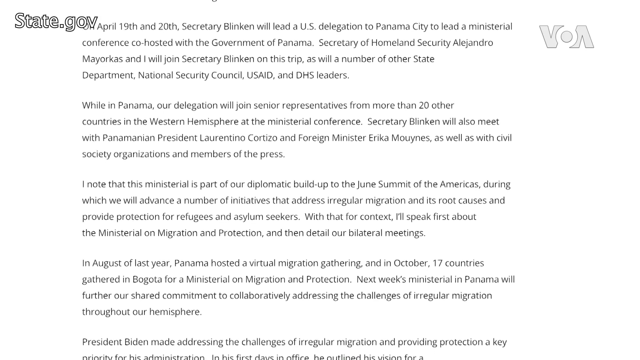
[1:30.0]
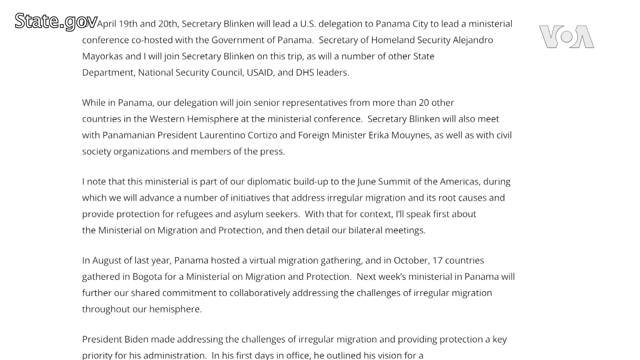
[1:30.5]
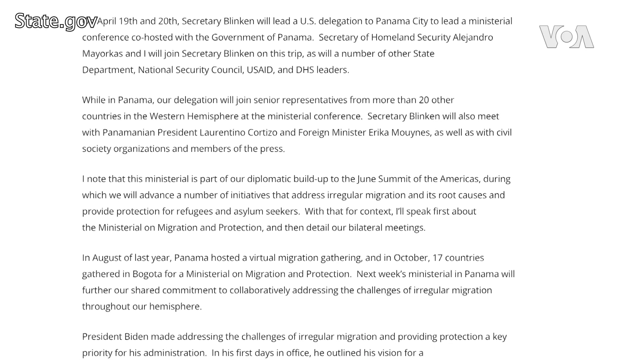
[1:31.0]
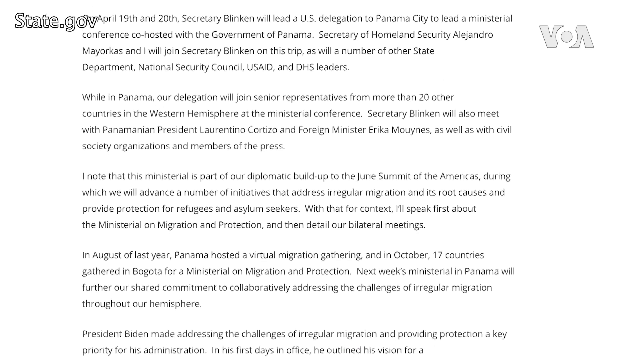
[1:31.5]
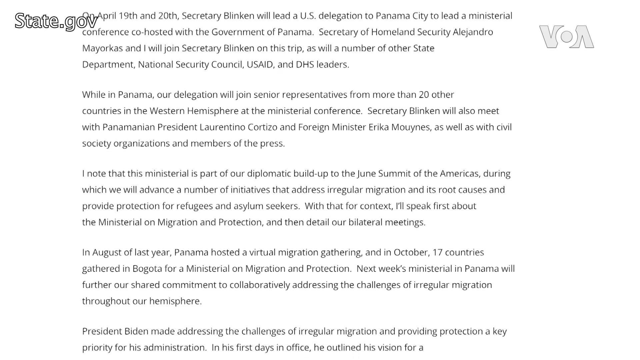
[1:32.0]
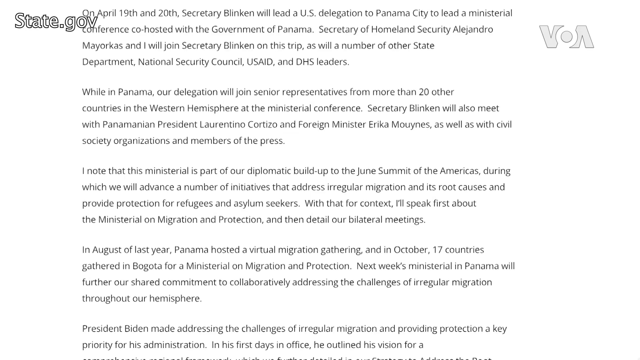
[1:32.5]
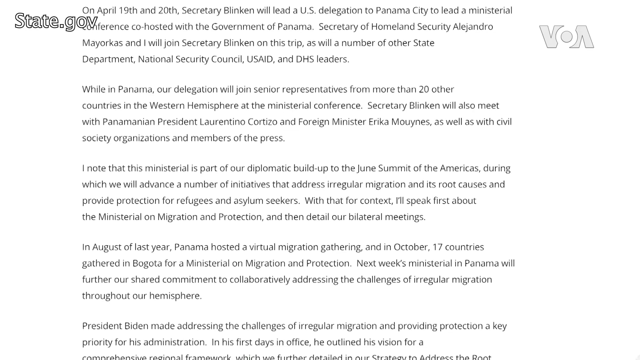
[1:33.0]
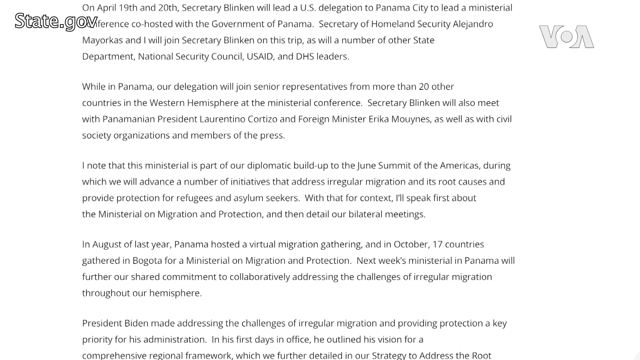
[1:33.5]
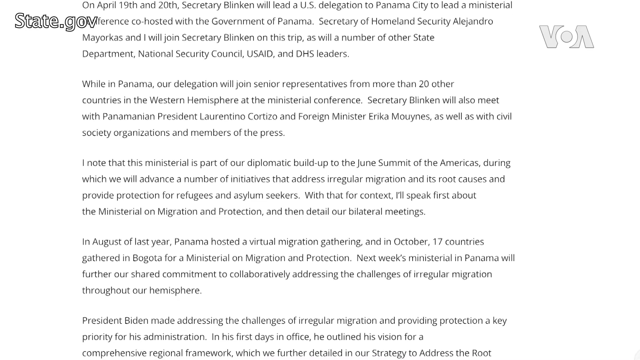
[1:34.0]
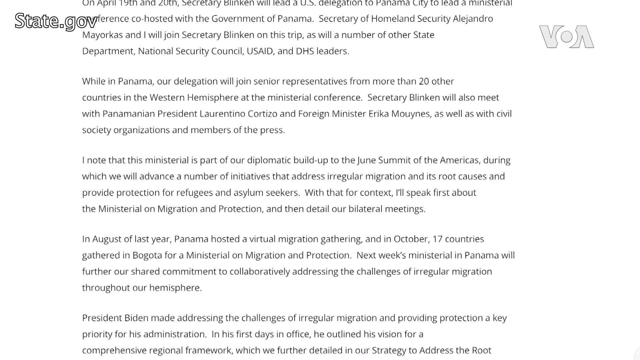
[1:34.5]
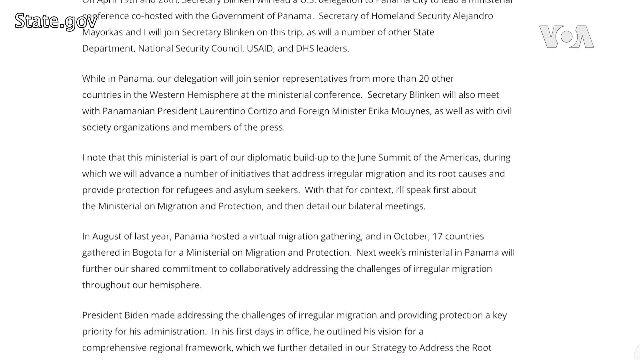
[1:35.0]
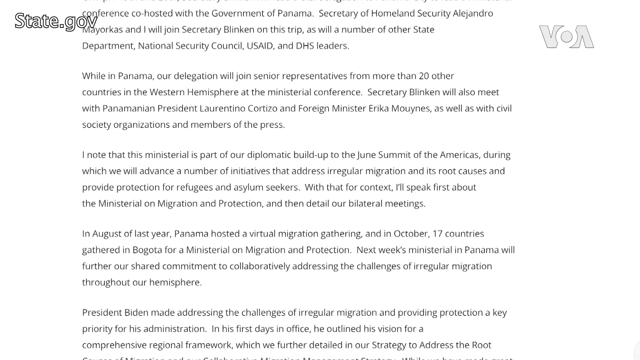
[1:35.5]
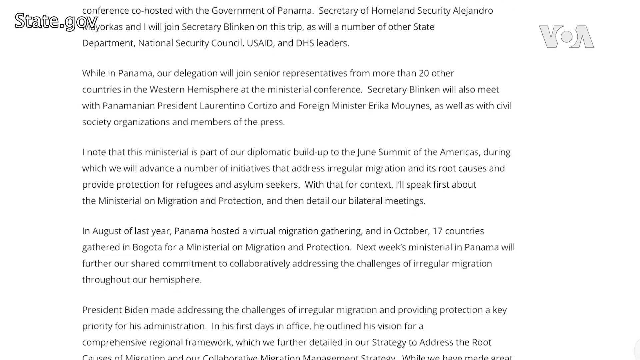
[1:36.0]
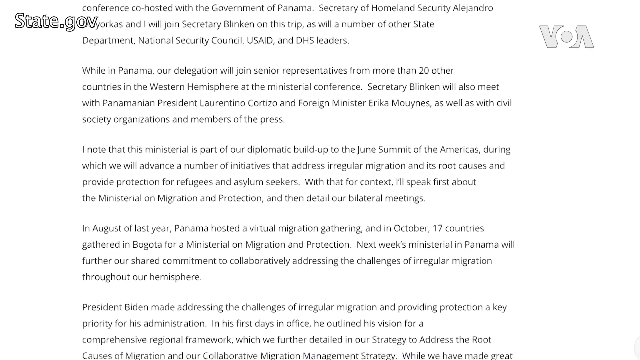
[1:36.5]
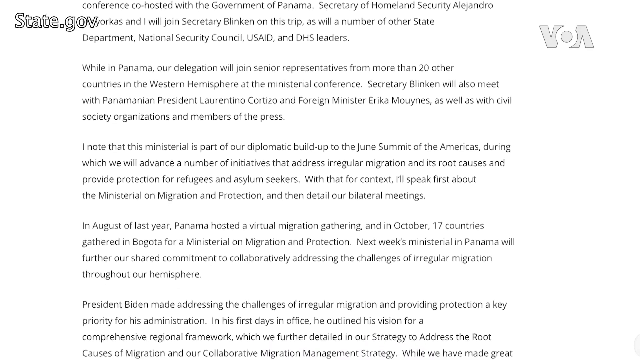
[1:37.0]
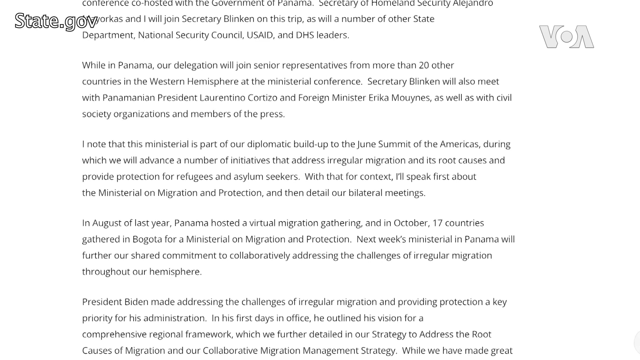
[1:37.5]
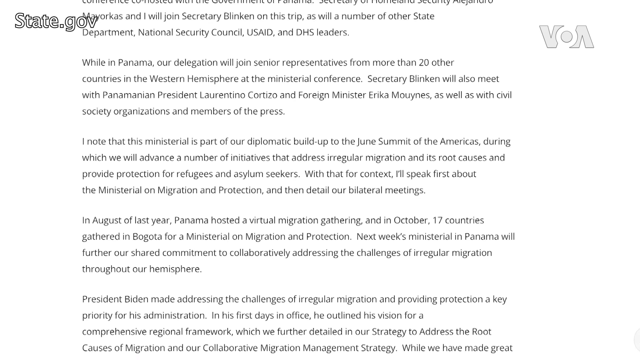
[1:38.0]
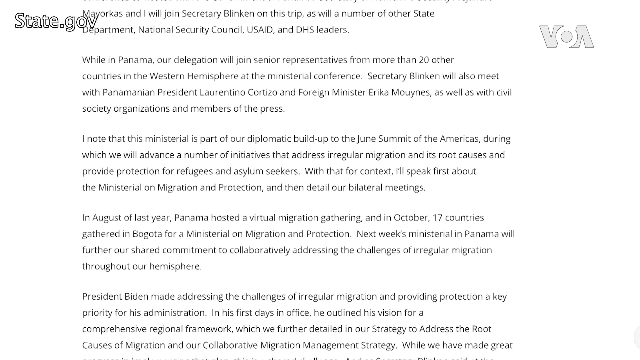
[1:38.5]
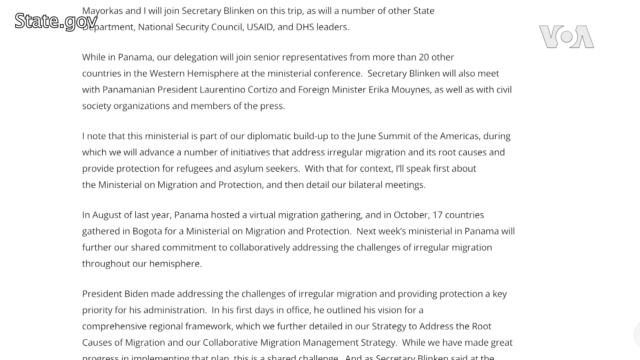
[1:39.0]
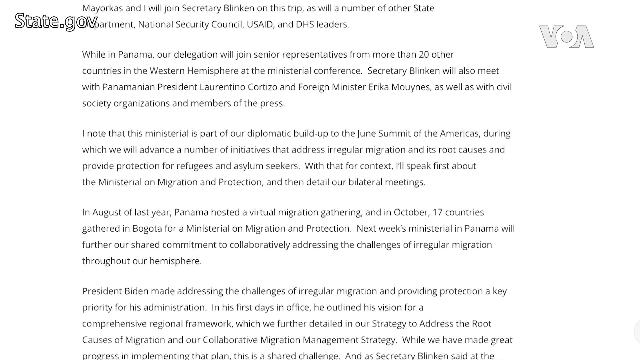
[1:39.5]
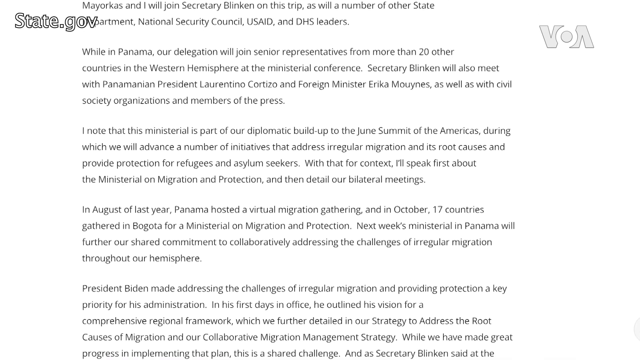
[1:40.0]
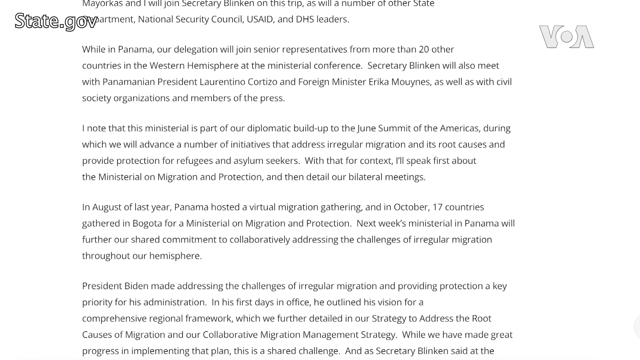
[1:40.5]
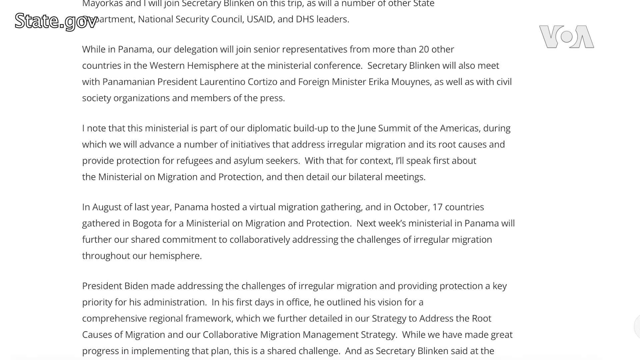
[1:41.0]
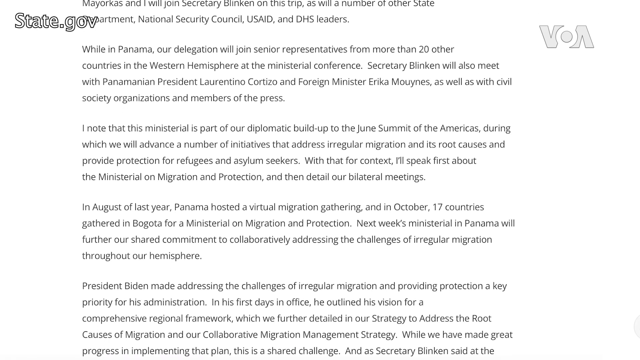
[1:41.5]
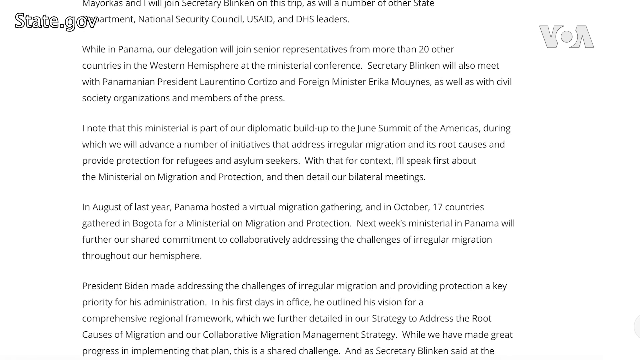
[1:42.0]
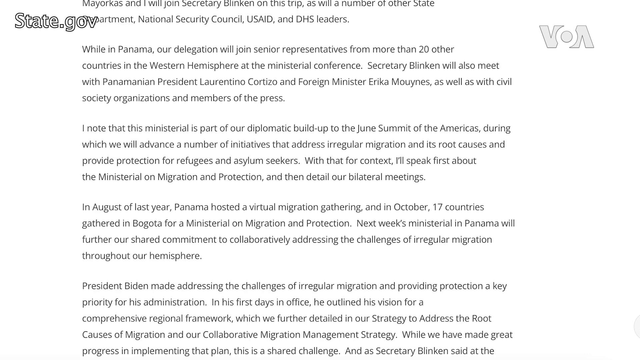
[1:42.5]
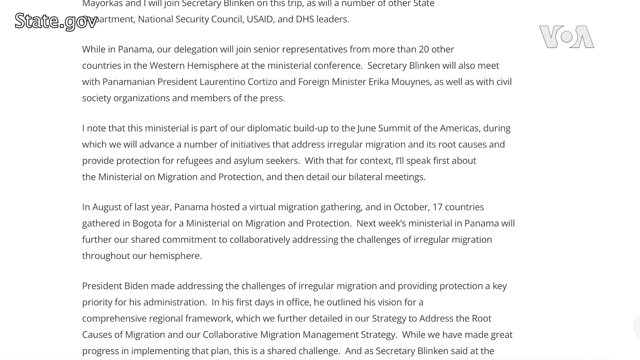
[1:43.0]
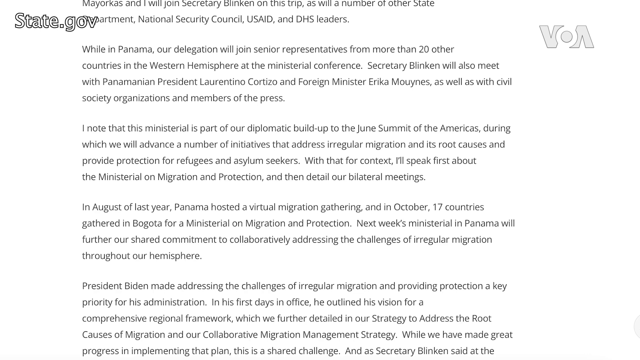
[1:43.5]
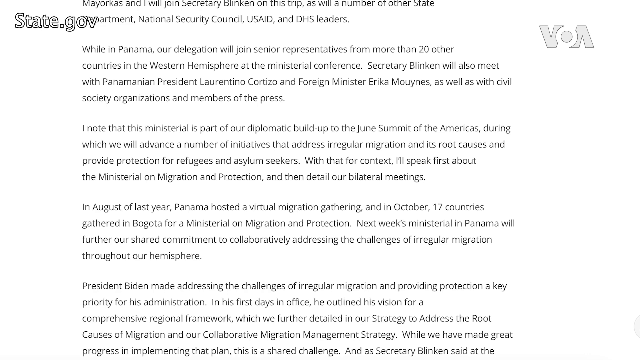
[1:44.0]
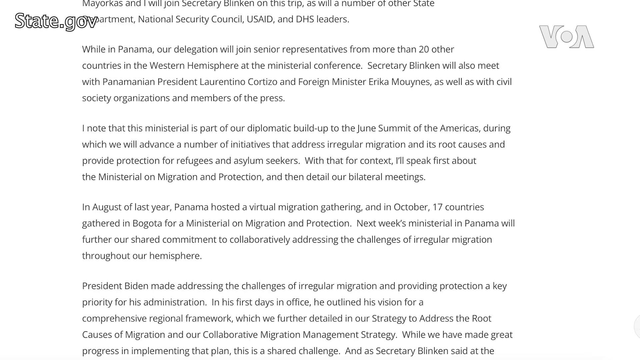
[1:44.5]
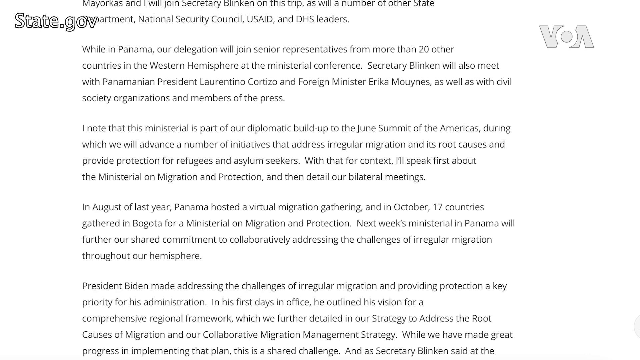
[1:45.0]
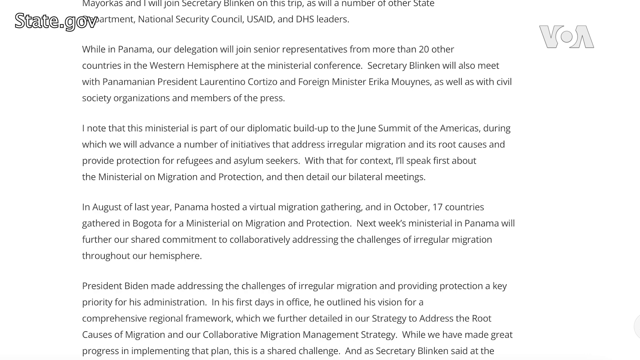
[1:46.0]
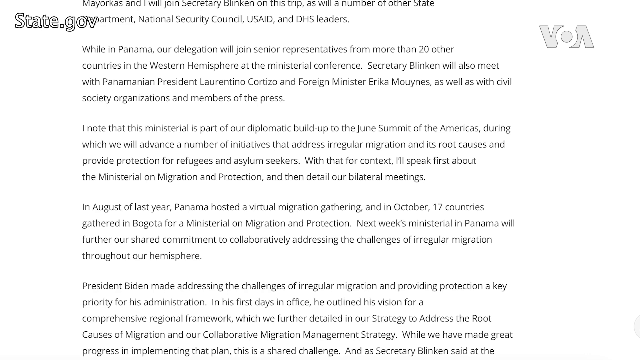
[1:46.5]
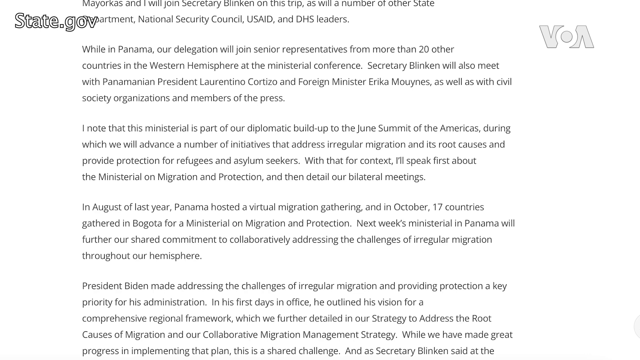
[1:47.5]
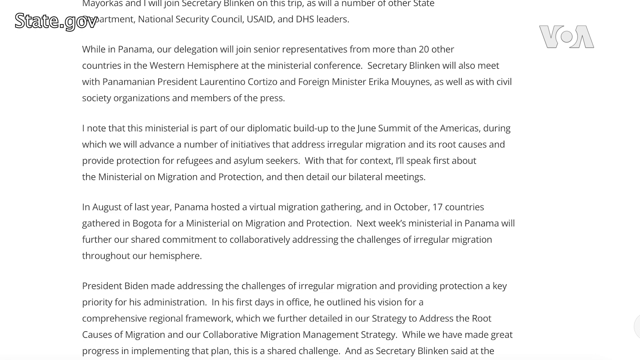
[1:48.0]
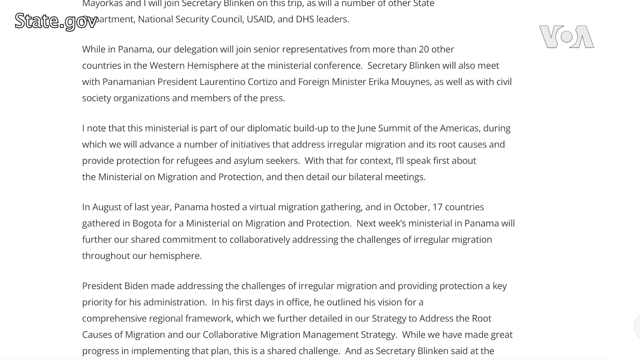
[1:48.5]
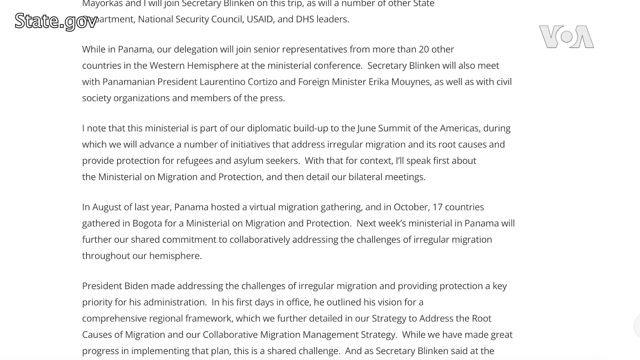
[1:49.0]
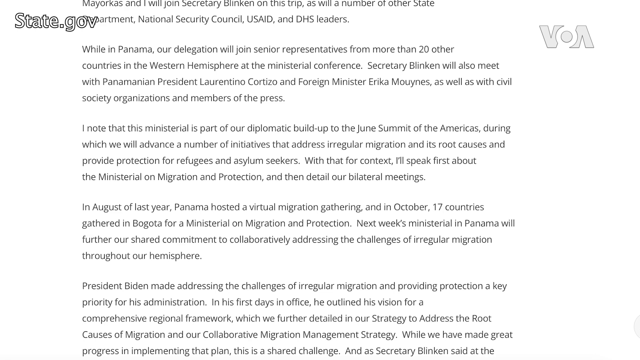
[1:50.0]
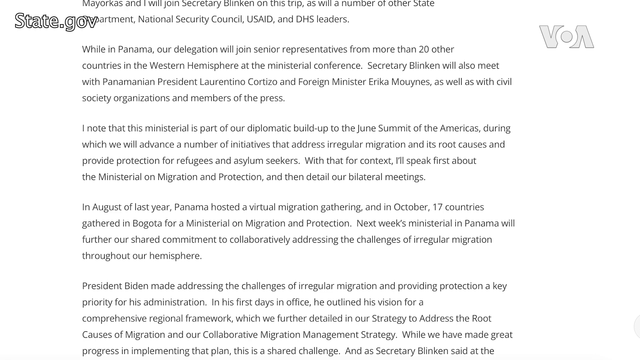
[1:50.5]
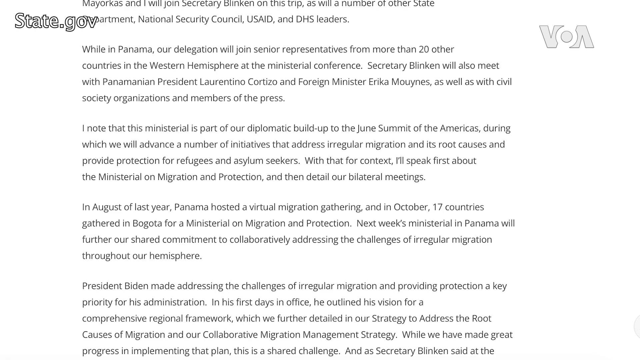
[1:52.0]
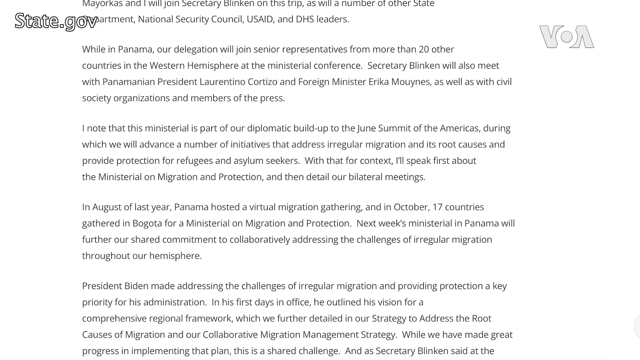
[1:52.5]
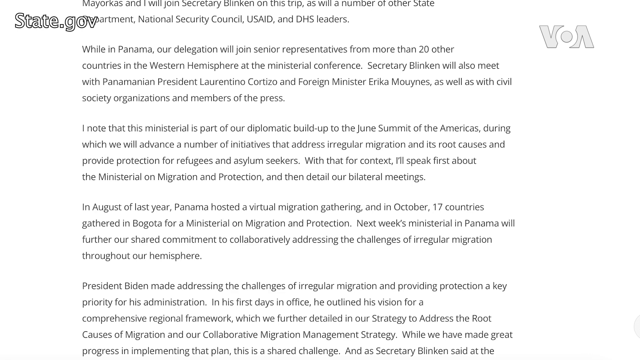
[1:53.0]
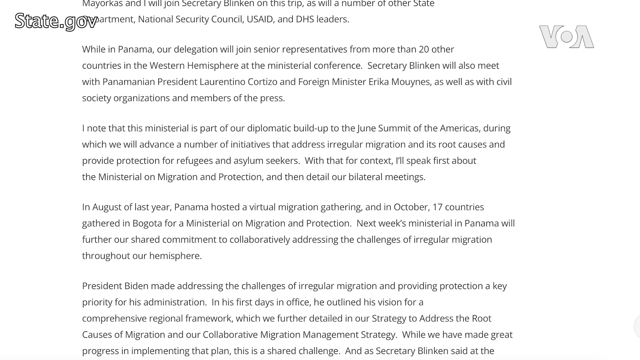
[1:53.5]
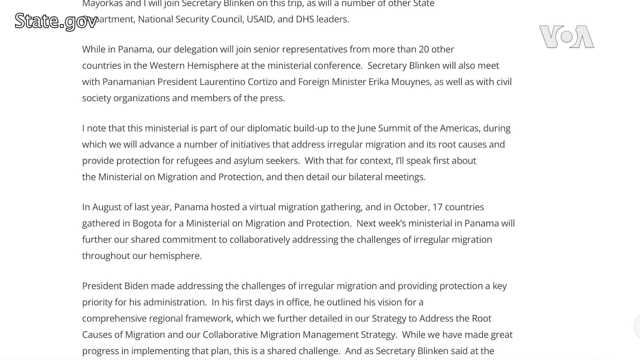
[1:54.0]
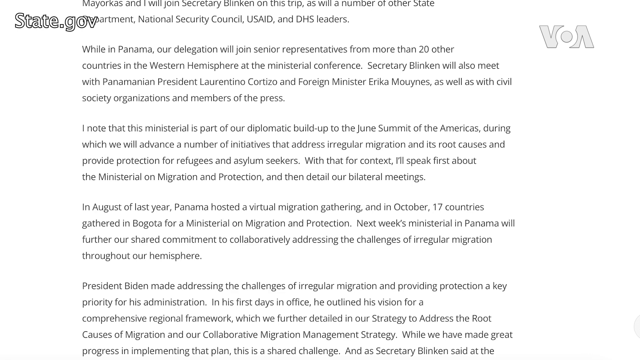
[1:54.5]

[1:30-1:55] Text on screen continues giving details of the trip. It reads "our delegation will join senior representative from more than 20 other countries in the Western Hemisphere at a ministerial conference" and continues with "Secretary Belkin will also meet with the" followed by further names, including the Panamanian president and foreign minister and members of the press.